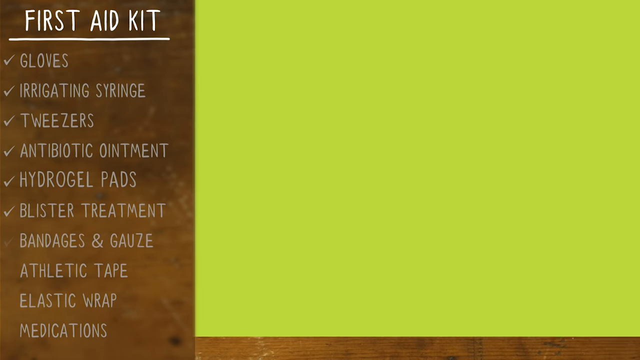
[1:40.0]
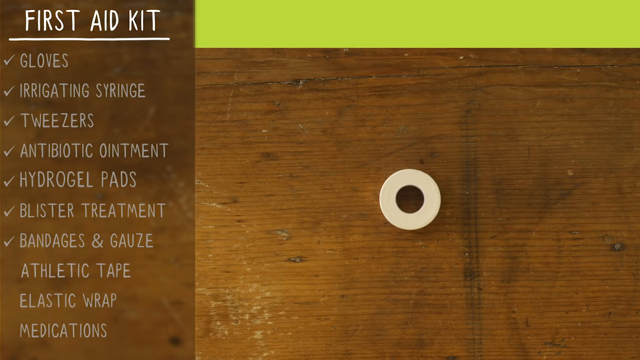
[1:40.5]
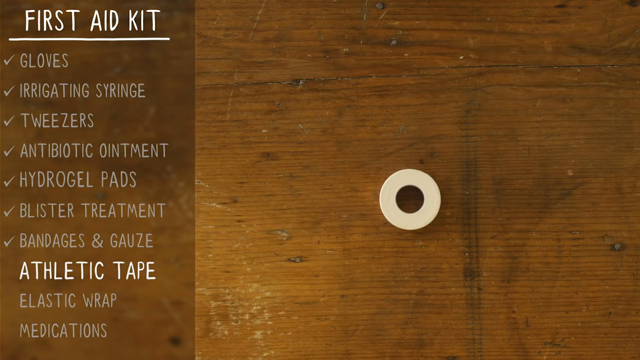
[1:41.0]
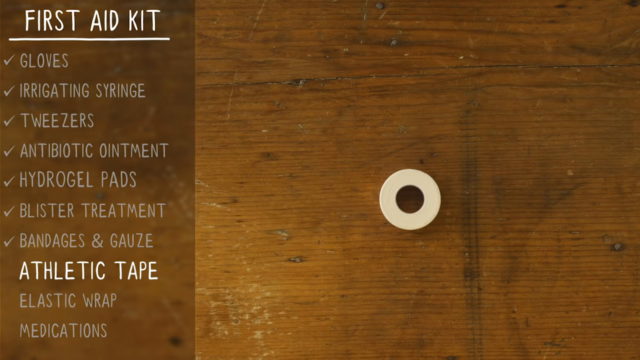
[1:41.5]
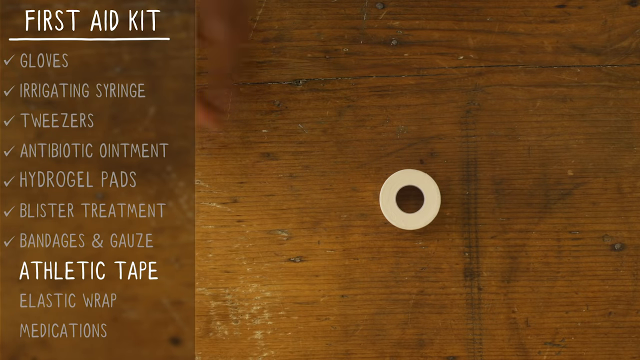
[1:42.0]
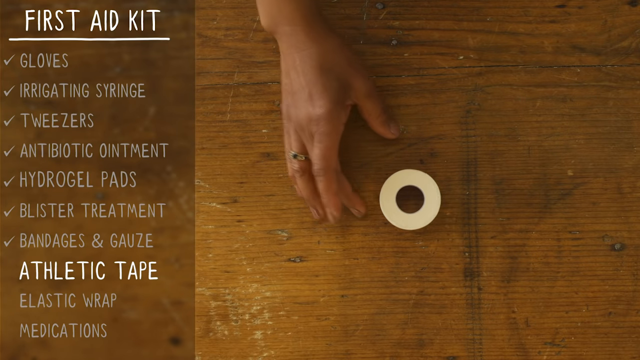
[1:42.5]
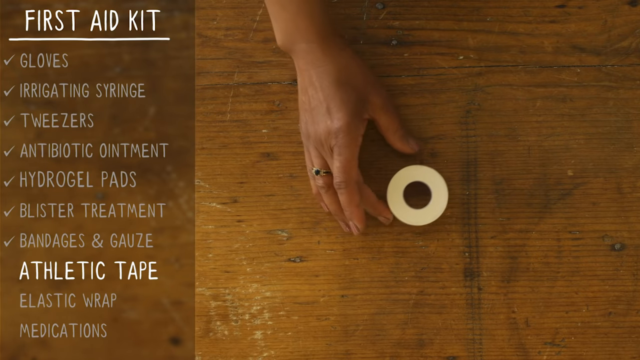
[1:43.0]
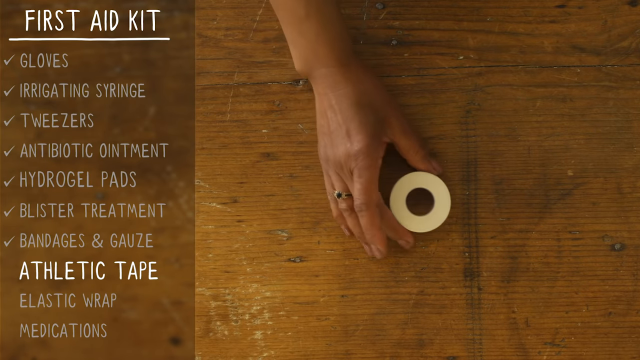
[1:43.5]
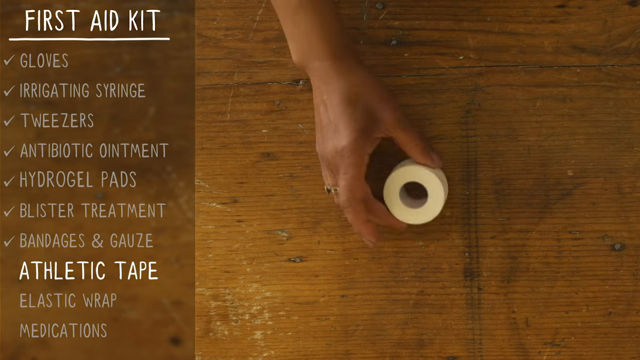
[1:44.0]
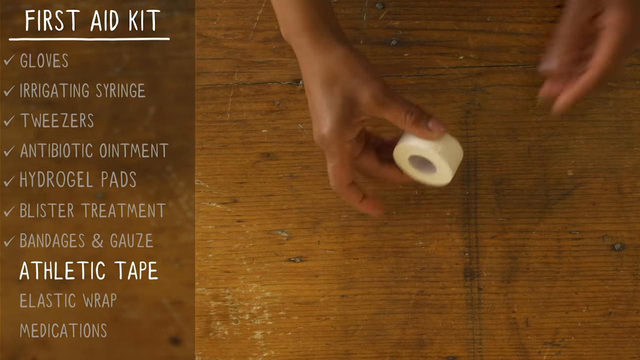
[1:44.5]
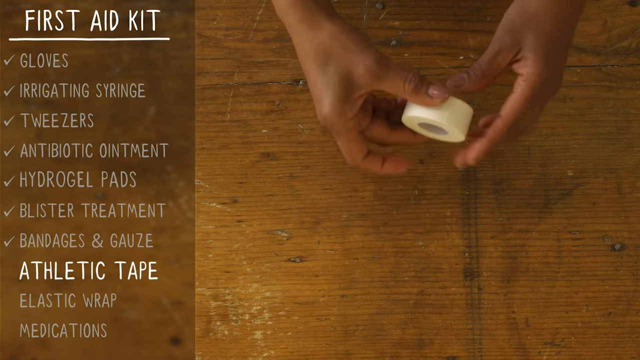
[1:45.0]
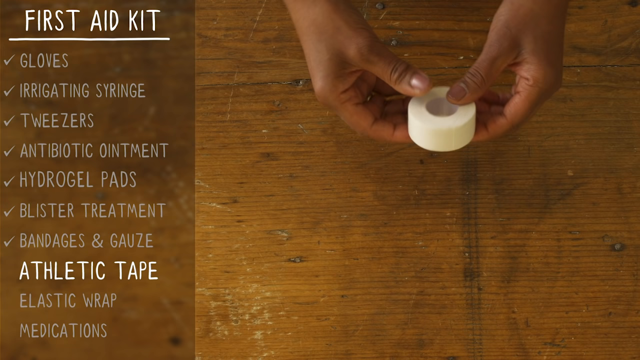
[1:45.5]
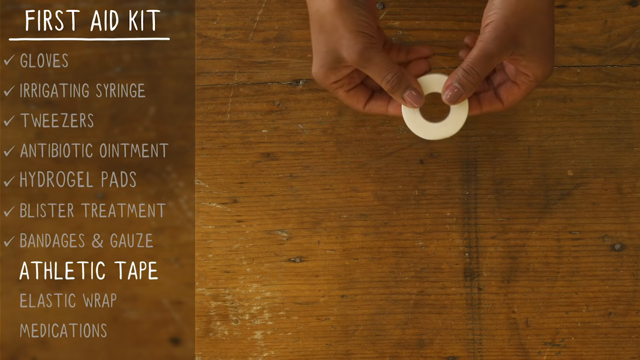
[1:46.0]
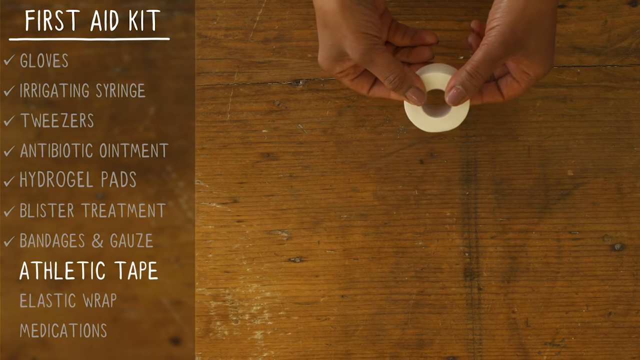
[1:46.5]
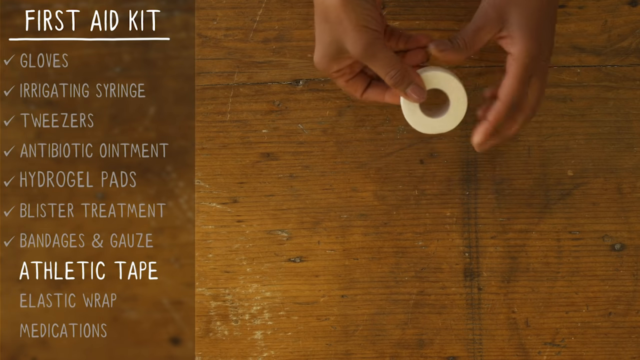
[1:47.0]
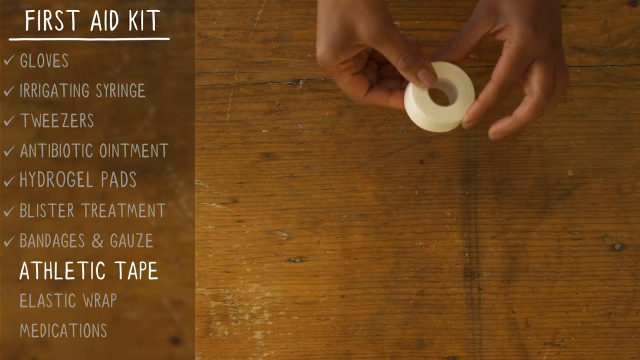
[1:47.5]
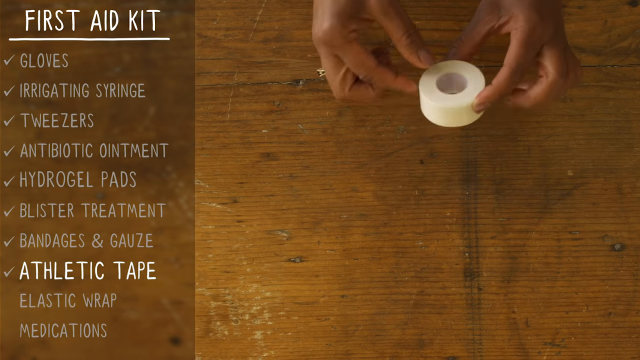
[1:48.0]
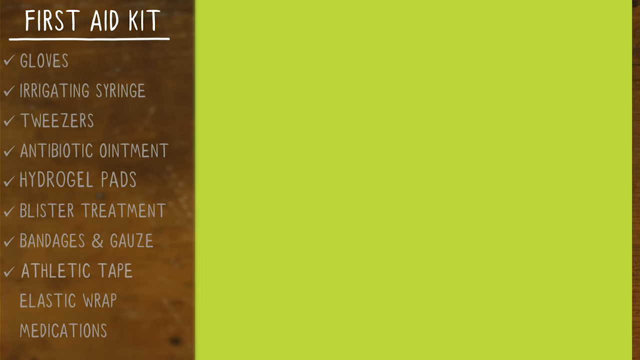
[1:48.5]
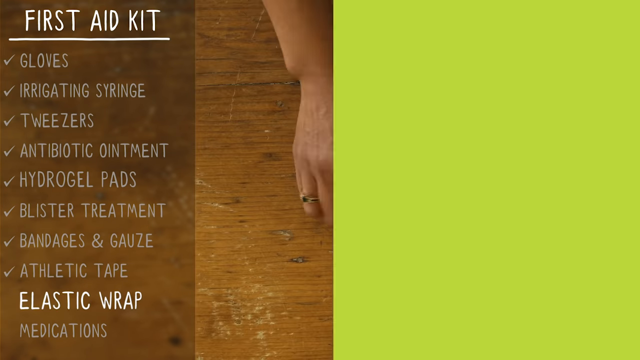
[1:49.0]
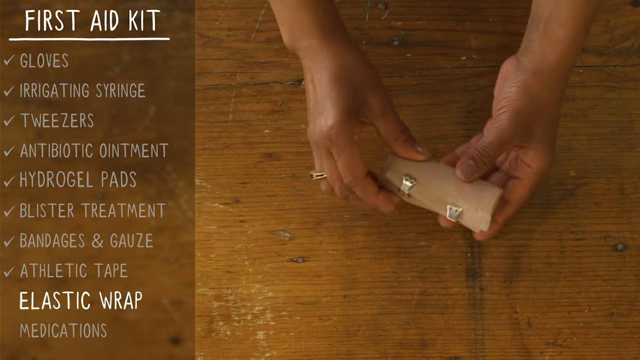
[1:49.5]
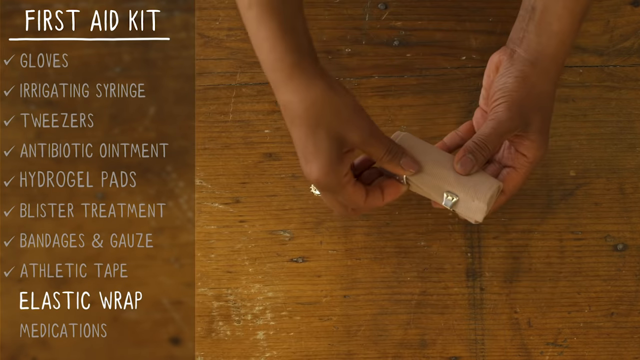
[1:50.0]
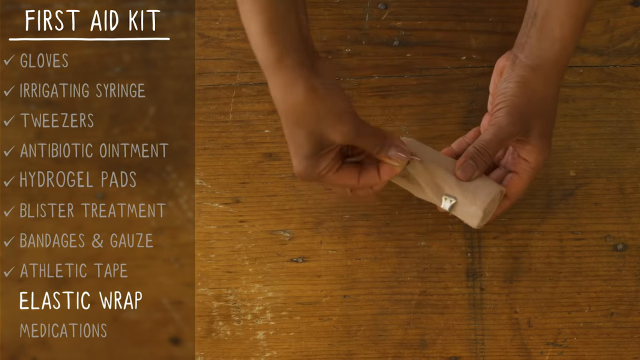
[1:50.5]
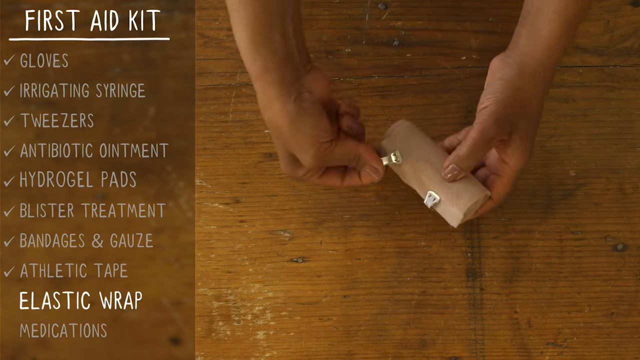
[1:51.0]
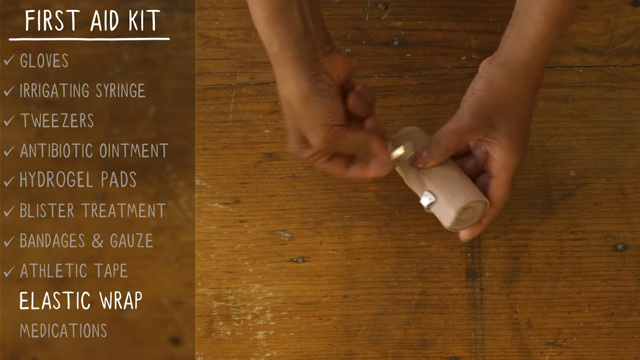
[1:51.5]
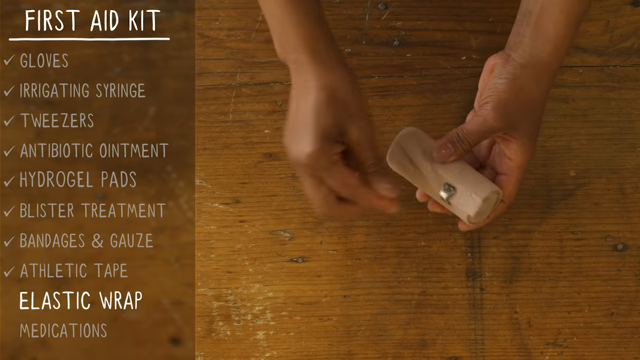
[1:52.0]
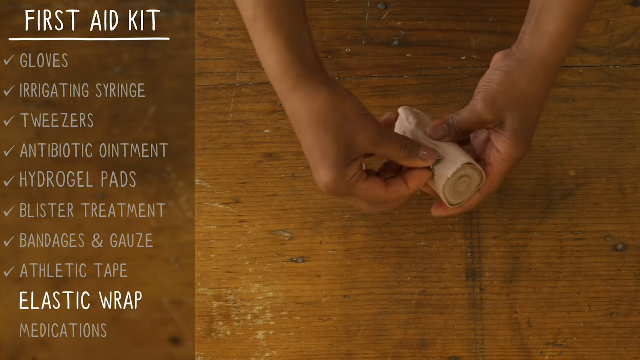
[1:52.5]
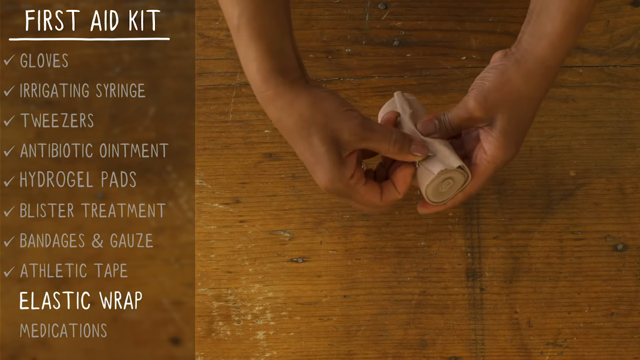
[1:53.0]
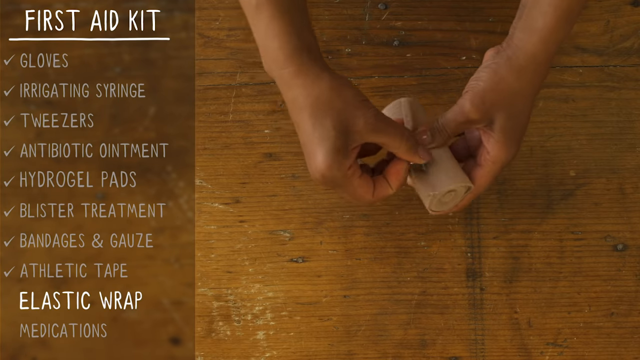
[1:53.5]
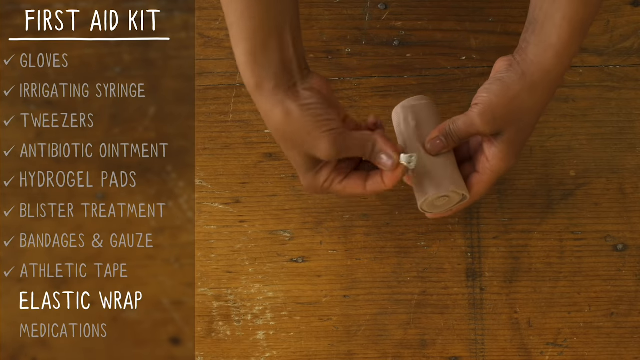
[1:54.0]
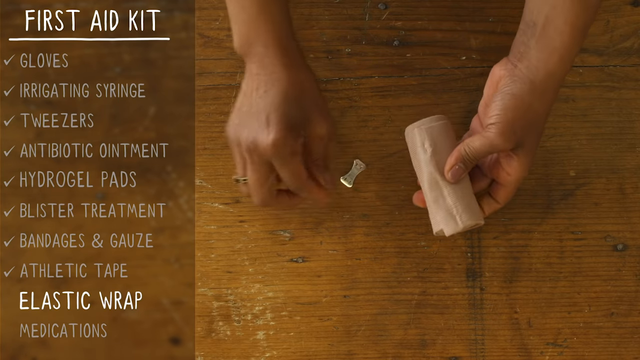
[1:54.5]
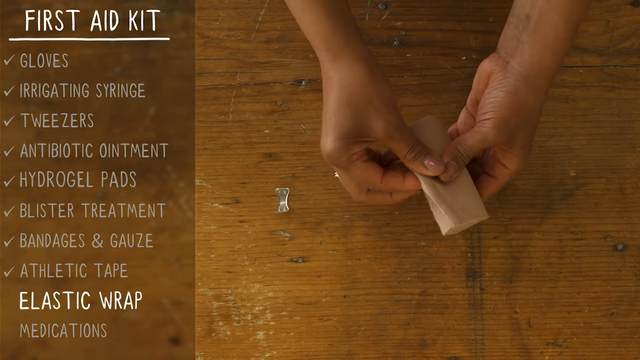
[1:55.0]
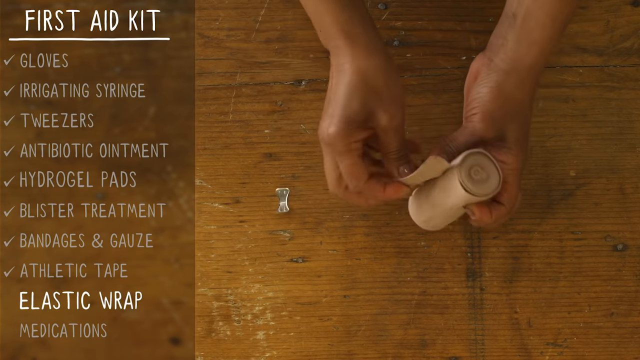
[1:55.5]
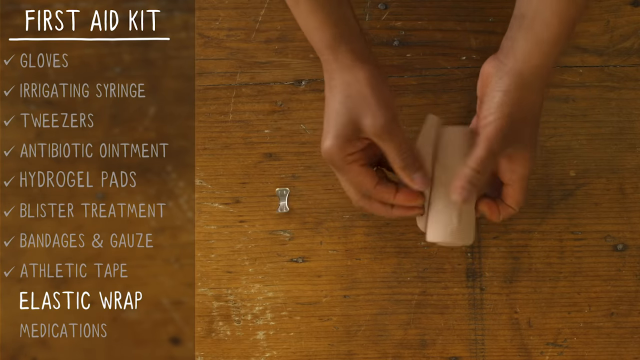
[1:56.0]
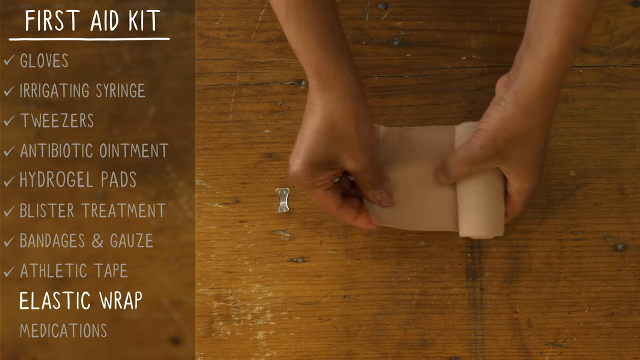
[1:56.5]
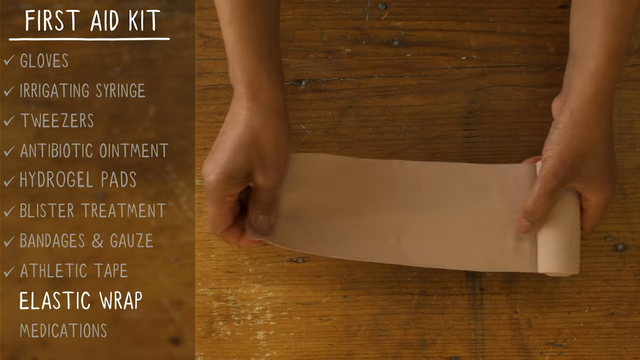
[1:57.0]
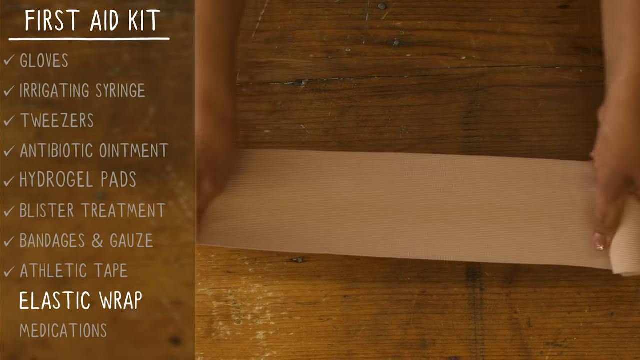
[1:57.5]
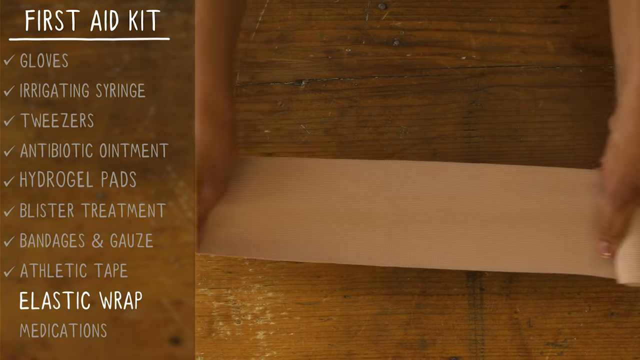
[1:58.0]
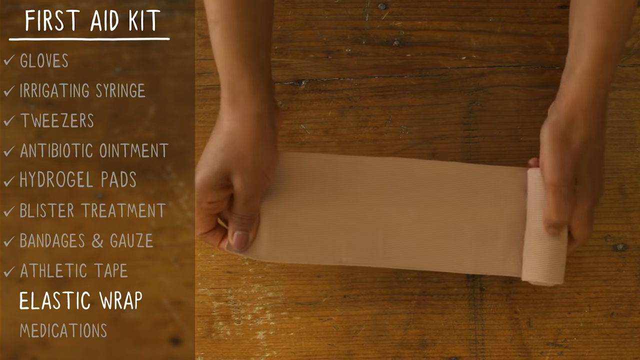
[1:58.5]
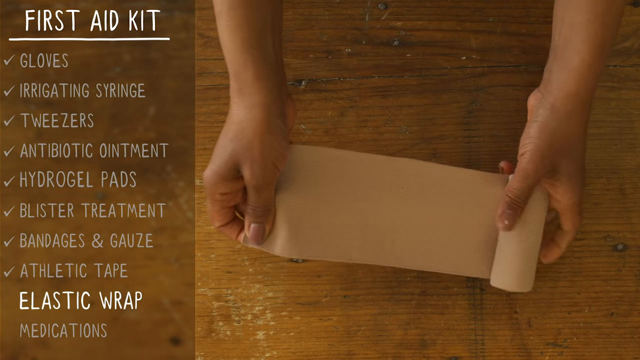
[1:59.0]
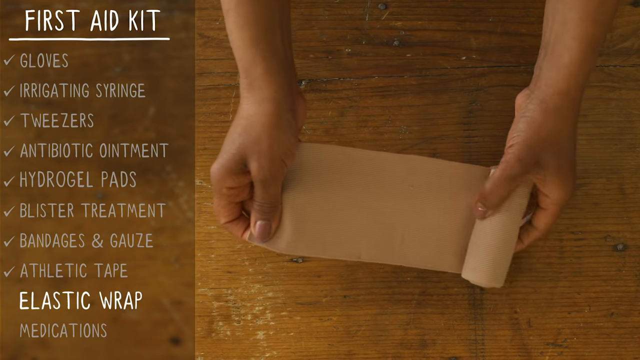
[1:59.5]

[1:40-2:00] On the left side of the screen, a list in white capital letters reads "first aid kit, gloves, irrigating syringe, tweezers, antibiotic ointment, hydrogel pads, blister treatment, bandages and gauze, athletic tape, elastic wrap, and medications". The main footage shows a large brown wooden table with a white cylindrical roll of athletic tape sitting on the tabletop. An African American girl's hand, wearing a black and silver ring on the ring finger, comes into view. The hands pick up the roll of athletic tape, take it off the table and show it to the camera. The video then cuts to the girl's hands holding a small tan roll of elastic wrap; she takes both silver clips off the wrap and begins to unroll it.